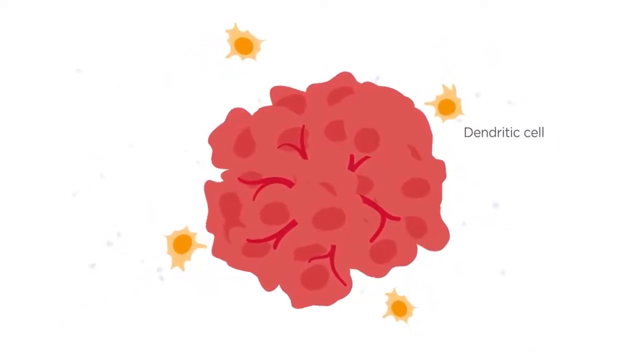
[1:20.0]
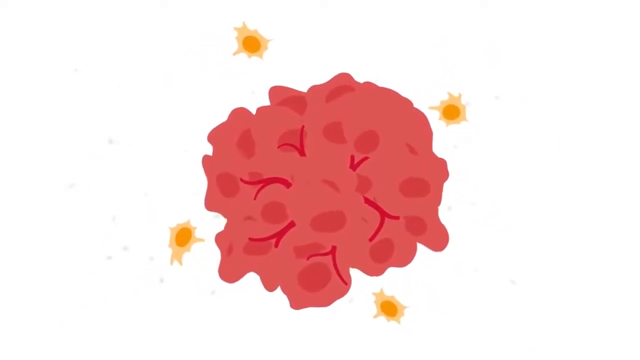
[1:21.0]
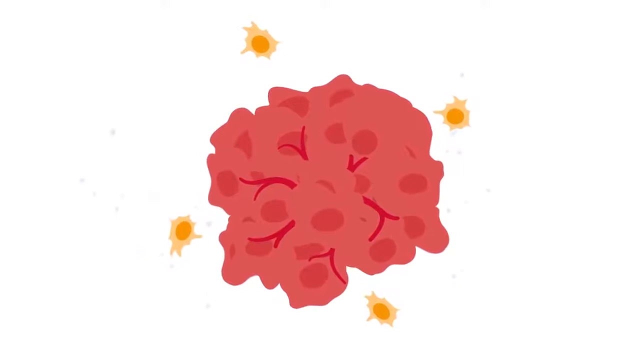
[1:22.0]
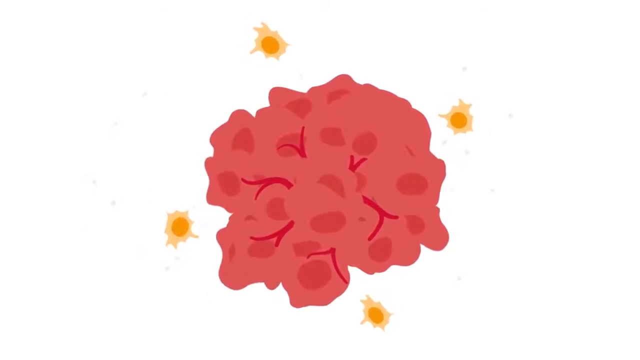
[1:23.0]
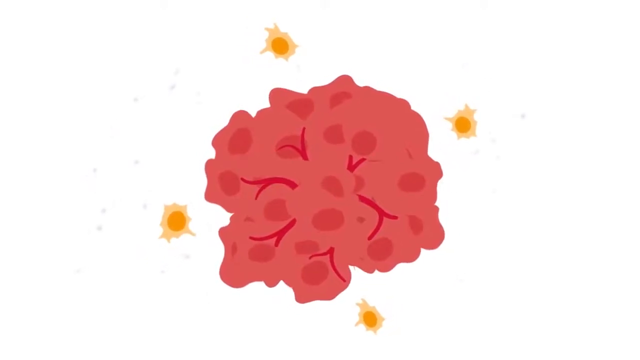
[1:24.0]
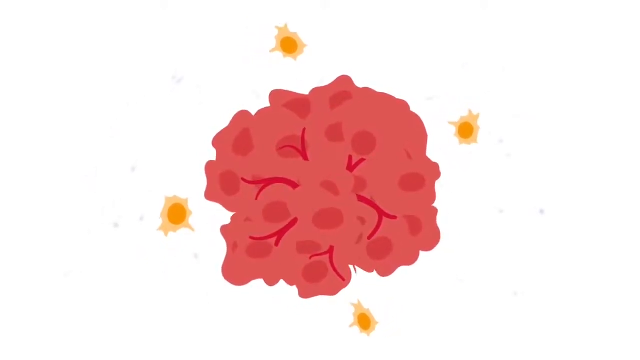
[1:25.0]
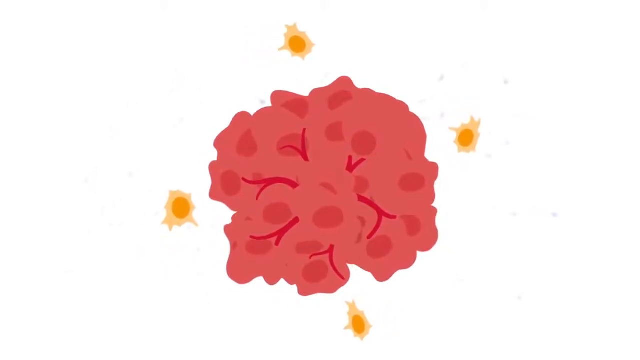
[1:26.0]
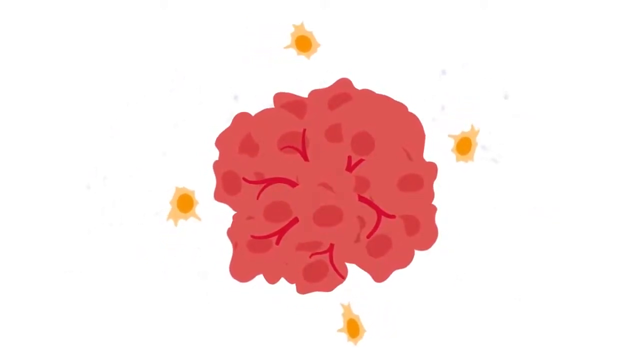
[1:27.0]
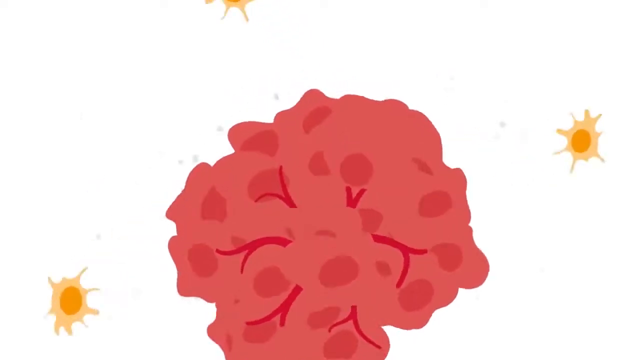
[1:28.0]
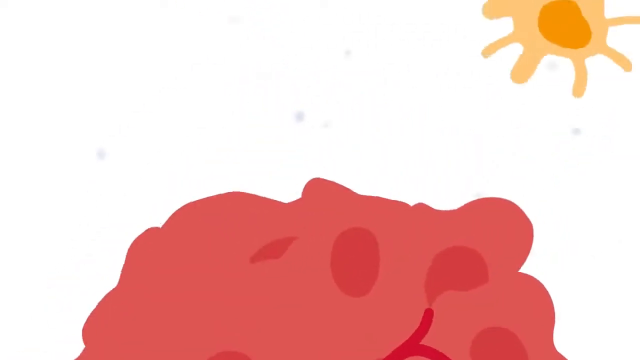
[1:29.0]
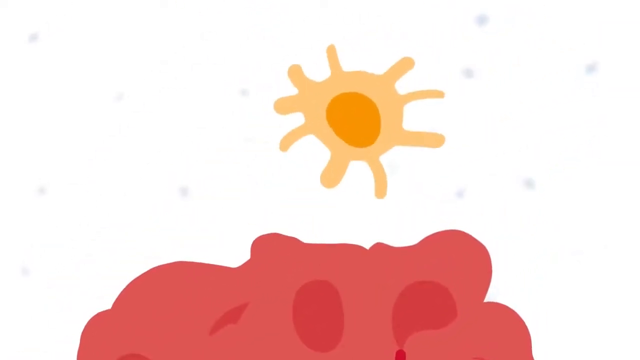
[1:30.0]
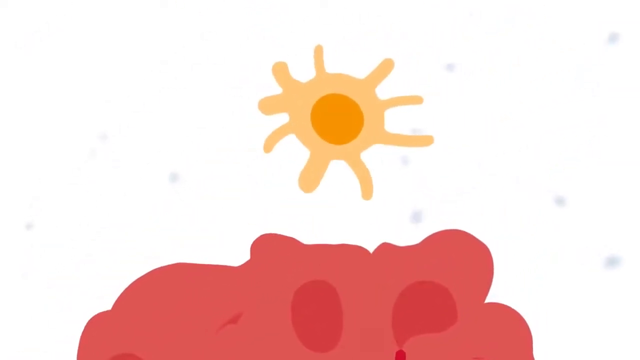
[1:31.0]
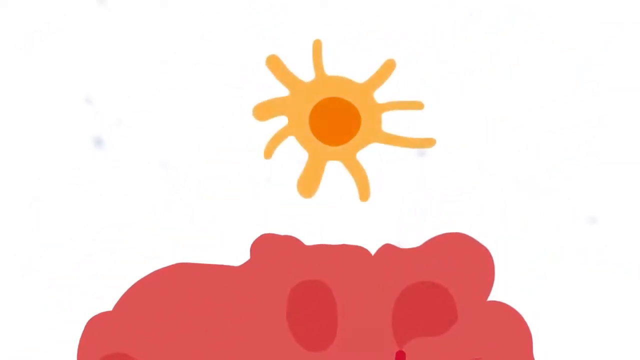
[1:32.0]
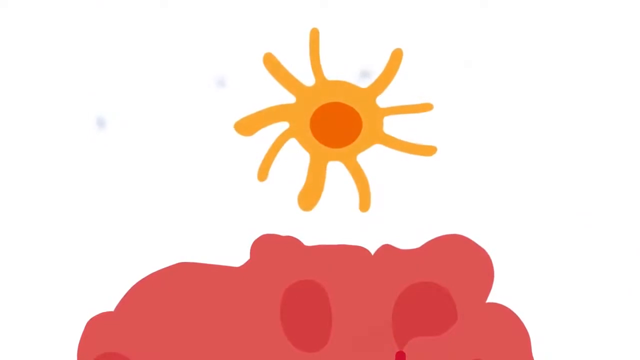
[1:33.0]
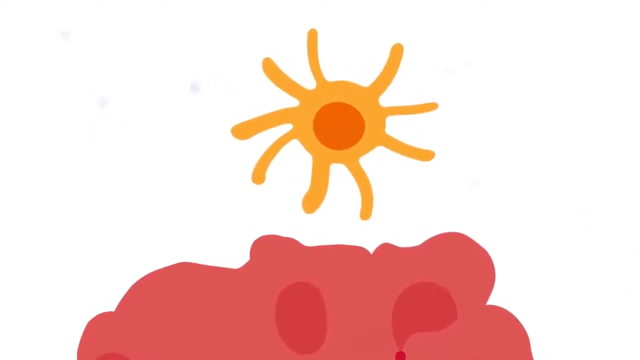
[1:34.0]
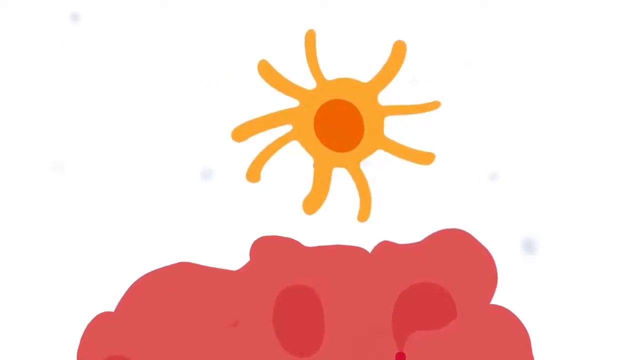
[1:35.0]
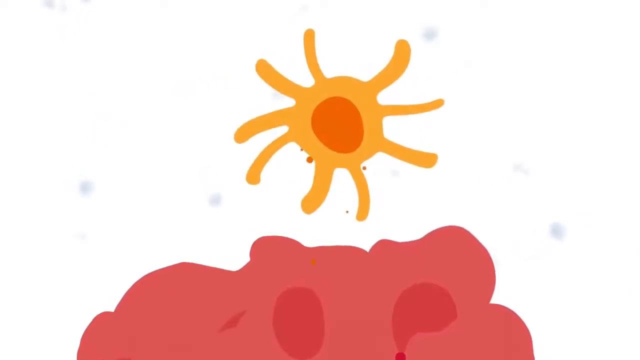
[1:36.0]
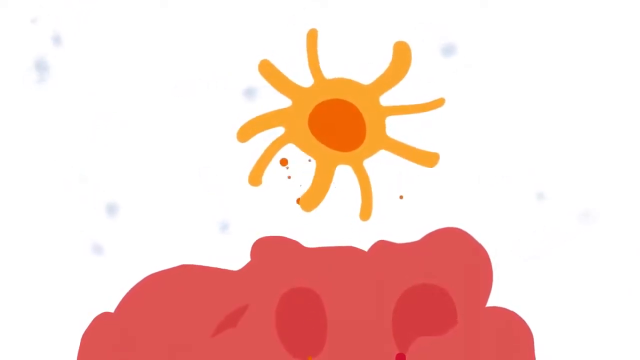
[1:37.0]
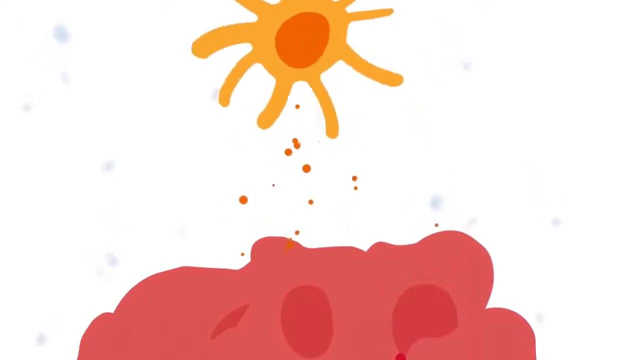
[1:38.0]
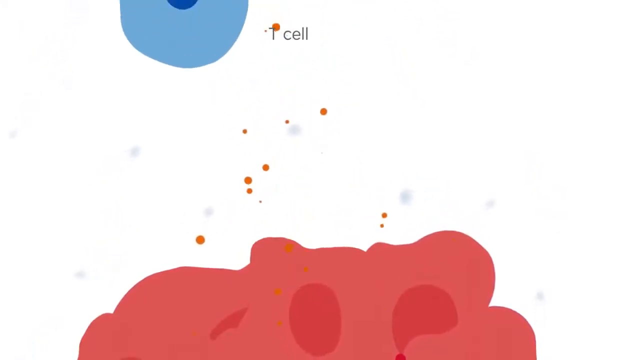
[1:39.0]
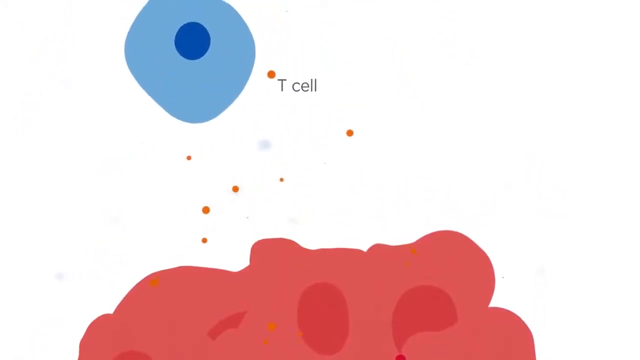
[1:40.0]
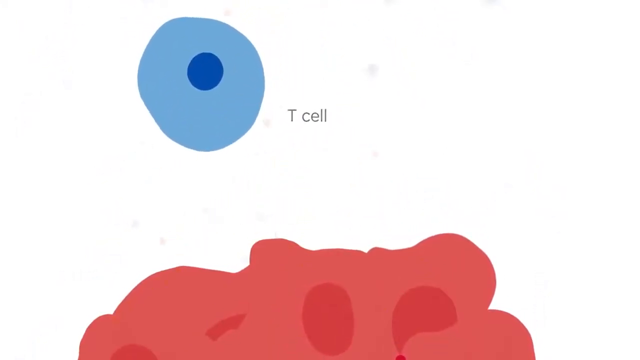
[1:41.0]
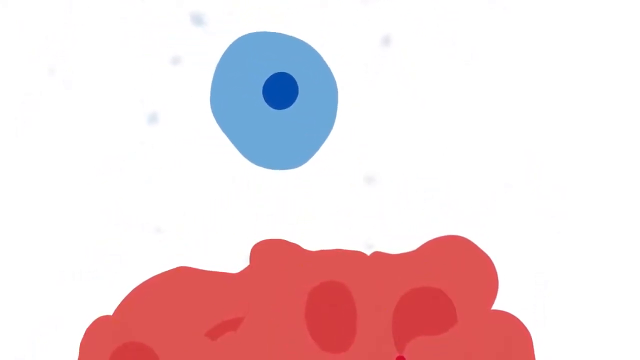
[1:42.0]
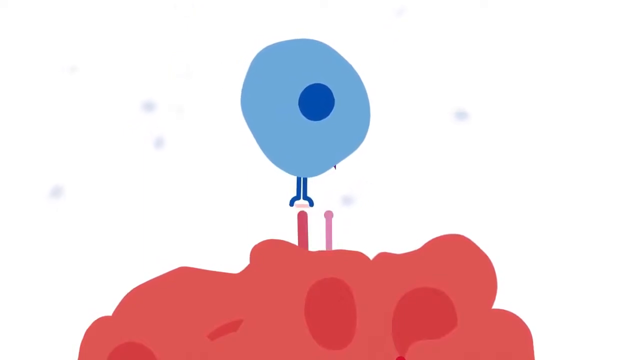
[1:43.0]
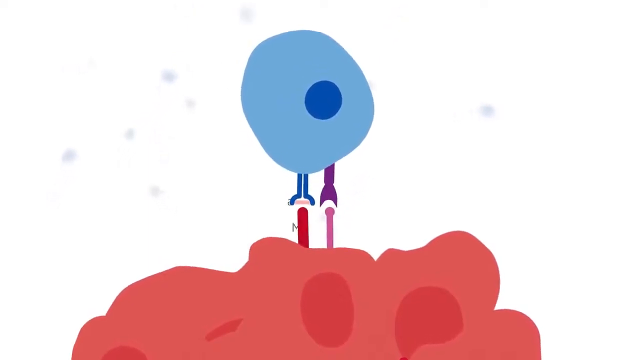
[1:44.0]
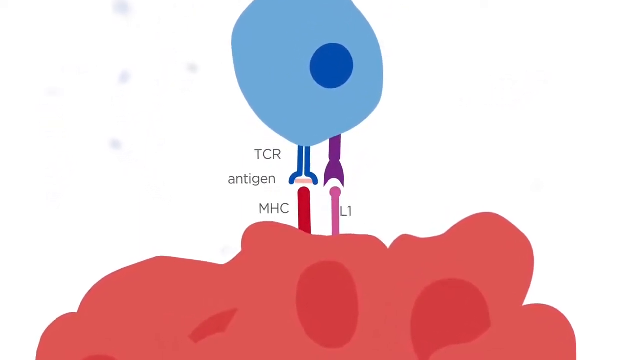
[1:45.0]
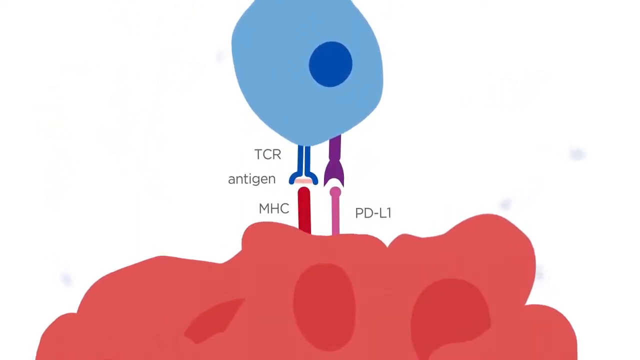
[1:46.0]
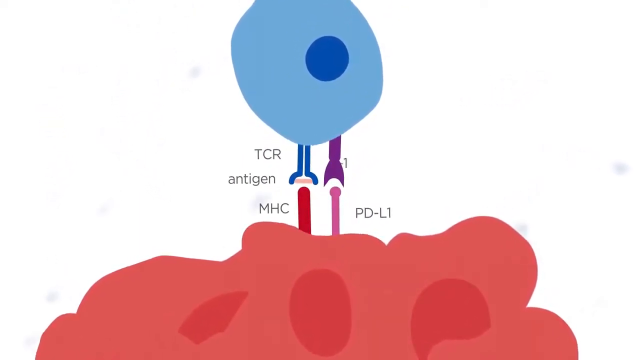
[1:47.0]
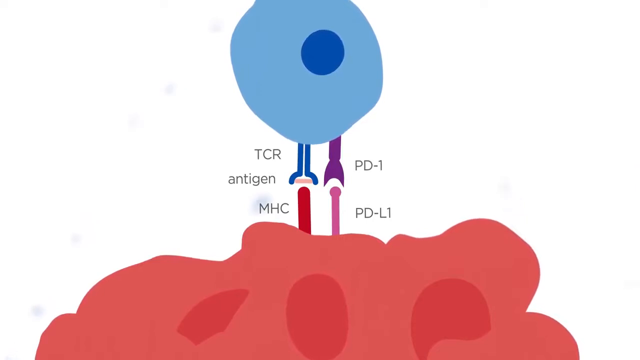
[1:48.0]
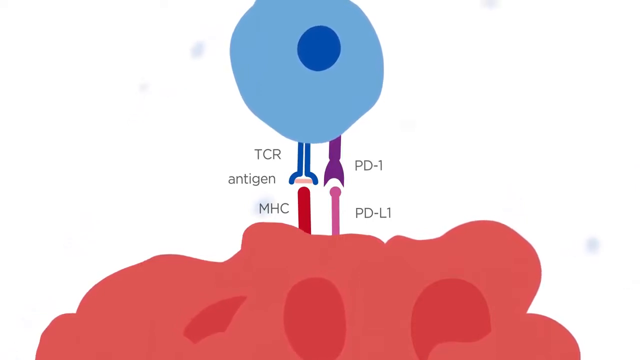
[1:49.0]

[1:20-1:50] The animated cell moves around, looking like it is pulsating, with the yellow objects around it. The video zooms in again to one of the edges of the red cell, showing one of the yellow and orange objects getting up close to it and turning different colors; it kind of looks like it is moving around in water. The object then looks like it is dropping orange or brown circular objects onto the cell. The yellow and orange object flies away while a T cell comes into frame on the left portion of the image: a somewhat circular object, light blue with a dark blue center, with the words "T cell" in gray lettering on its right side. The T cell goes over to the other cell, and animated legs come down to bind to it. Words pop up on the left side of the binding reading "TCR," "antigen" and "MHC," while the right side reads "PD-L1" and "PD-1," all in gray lettering.